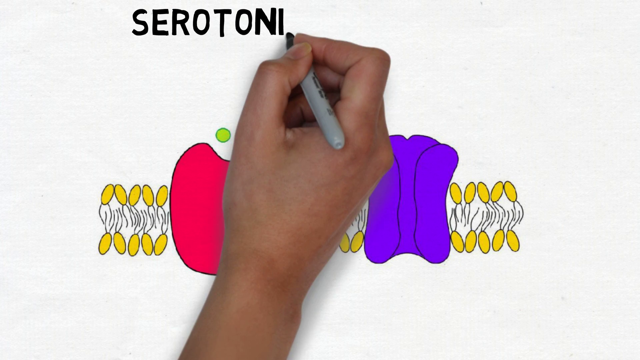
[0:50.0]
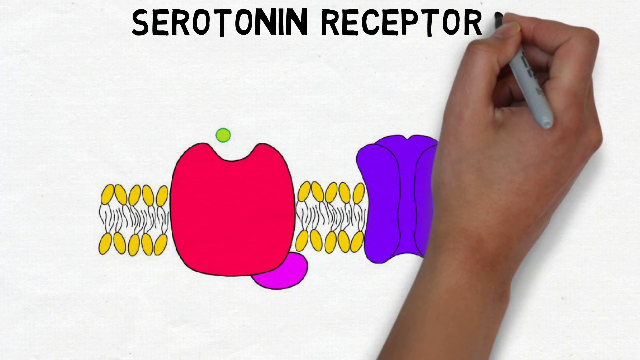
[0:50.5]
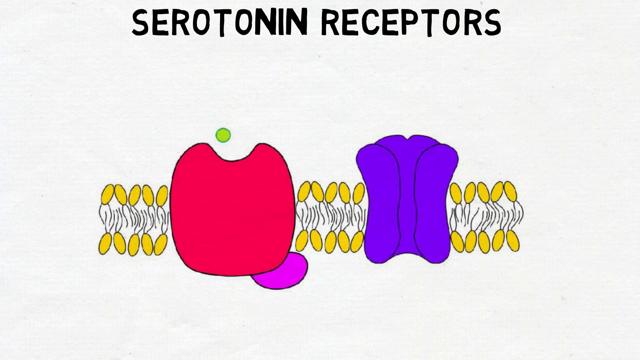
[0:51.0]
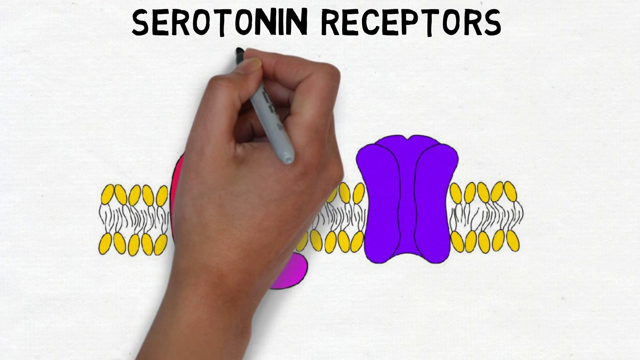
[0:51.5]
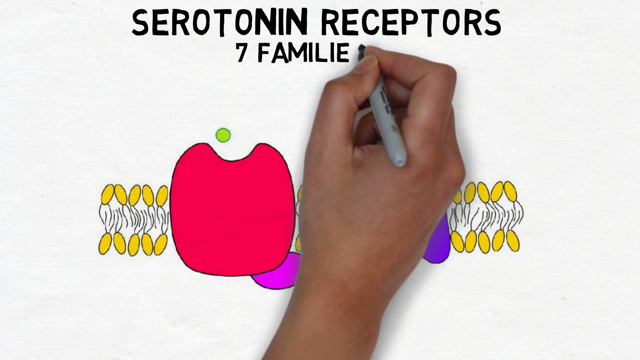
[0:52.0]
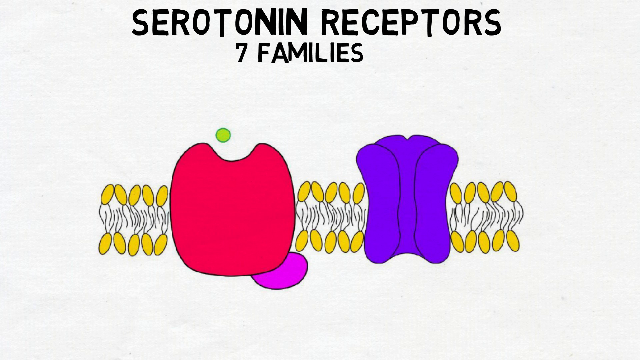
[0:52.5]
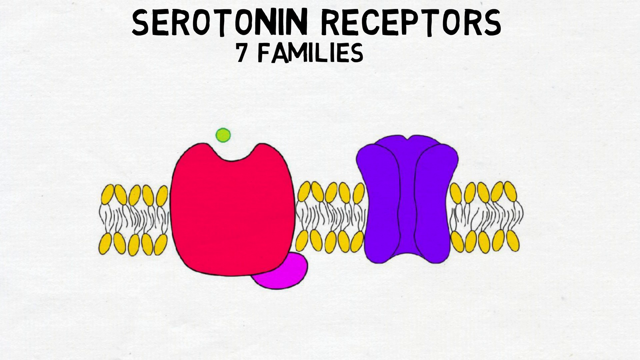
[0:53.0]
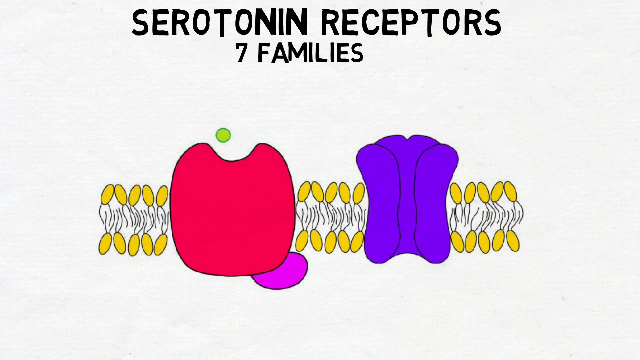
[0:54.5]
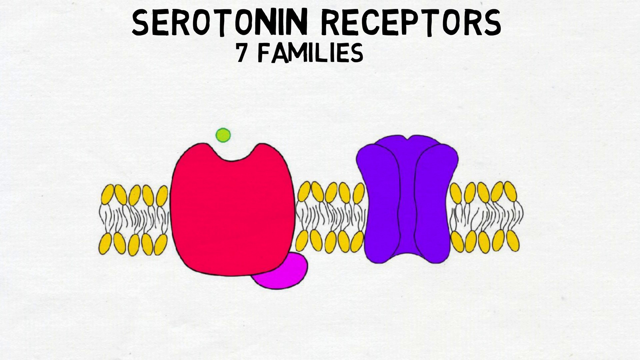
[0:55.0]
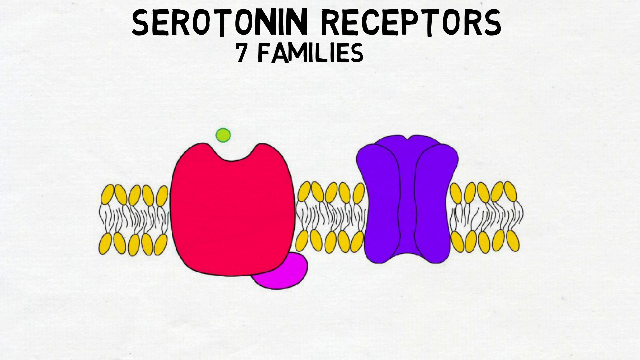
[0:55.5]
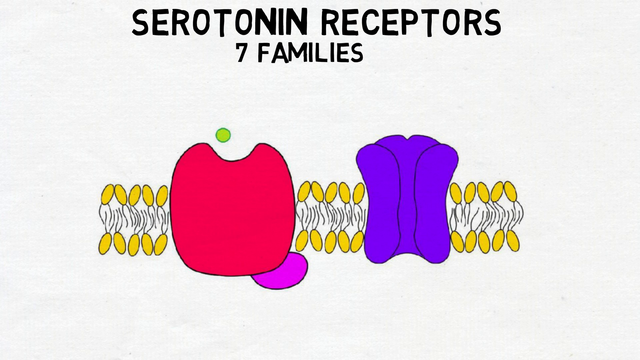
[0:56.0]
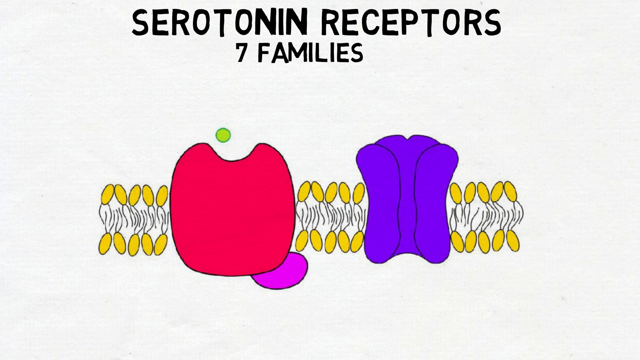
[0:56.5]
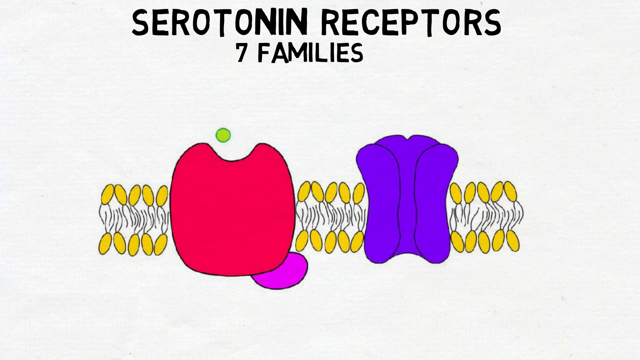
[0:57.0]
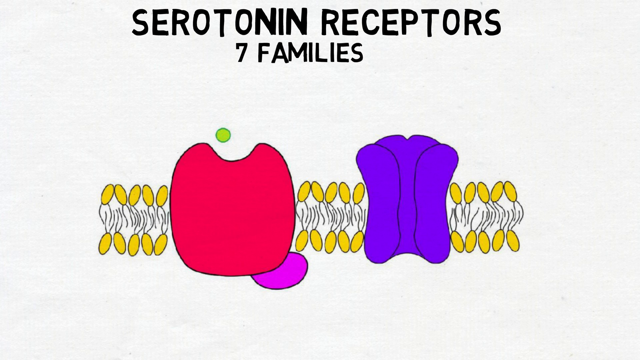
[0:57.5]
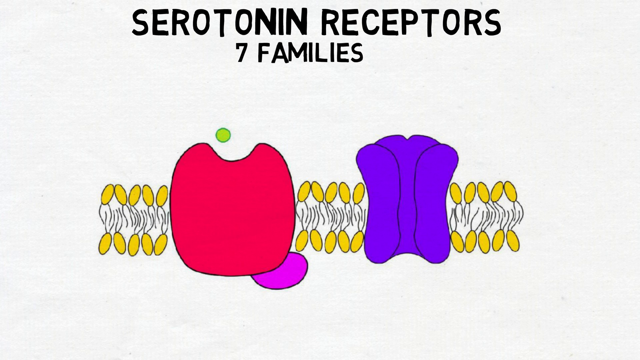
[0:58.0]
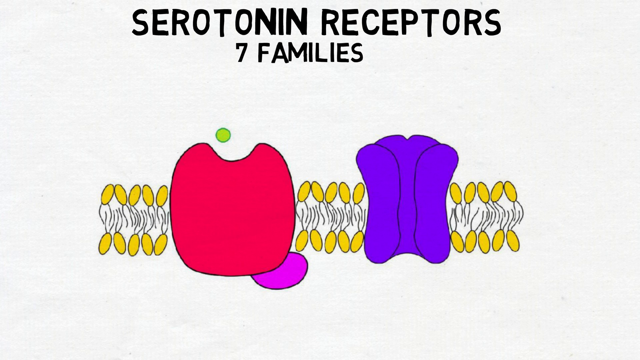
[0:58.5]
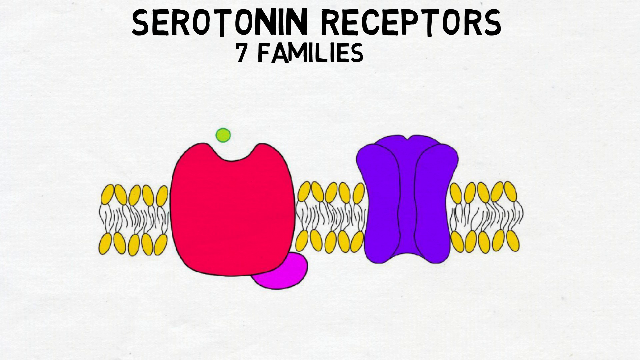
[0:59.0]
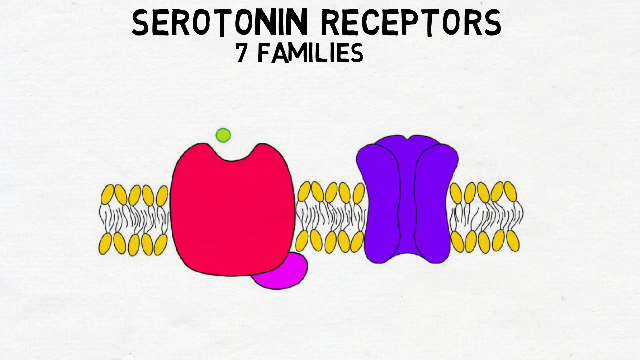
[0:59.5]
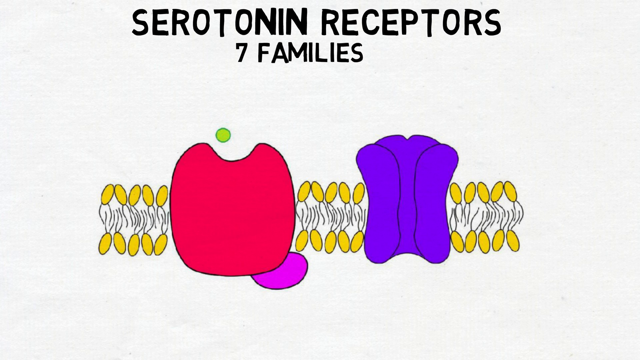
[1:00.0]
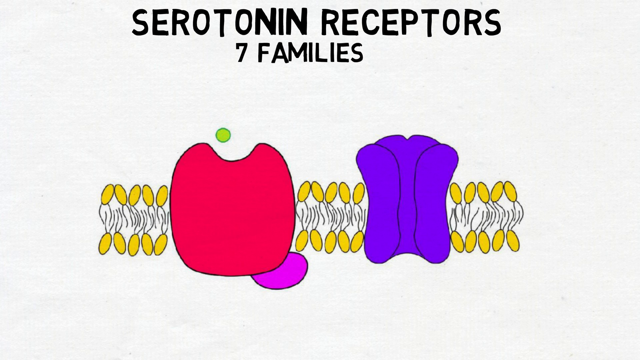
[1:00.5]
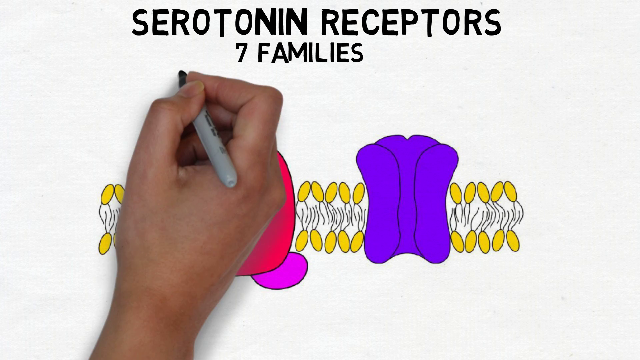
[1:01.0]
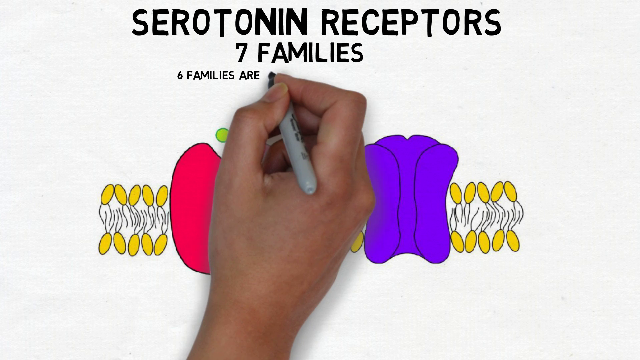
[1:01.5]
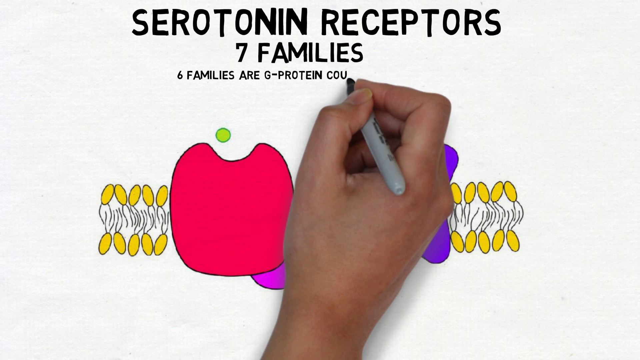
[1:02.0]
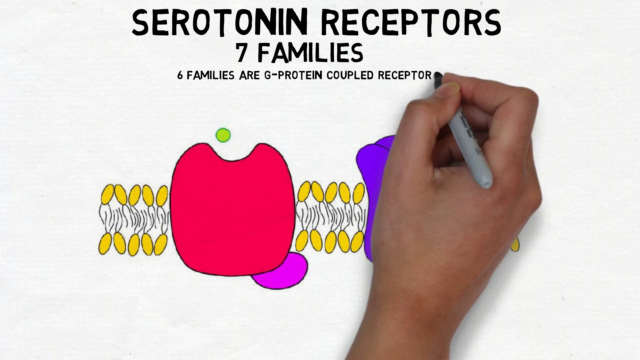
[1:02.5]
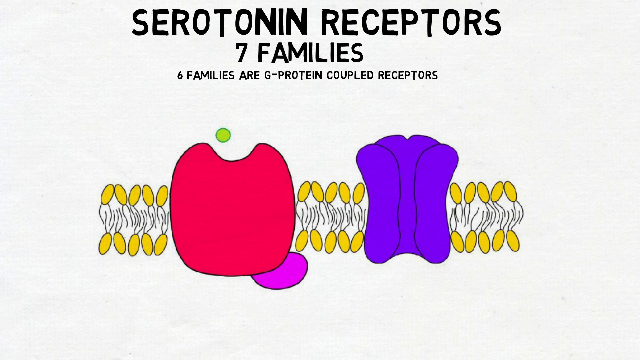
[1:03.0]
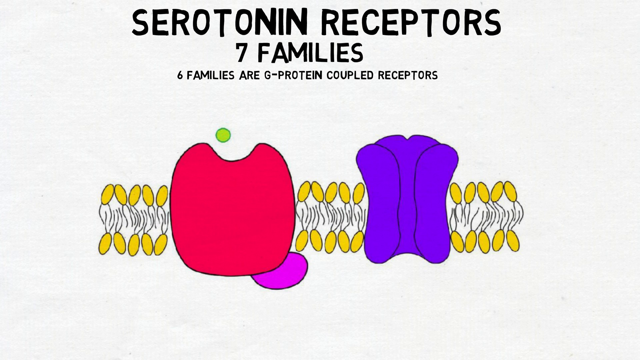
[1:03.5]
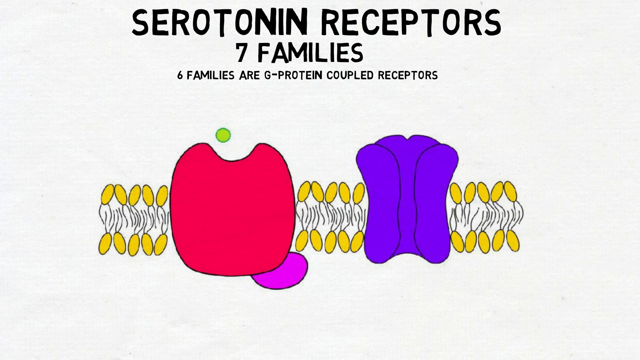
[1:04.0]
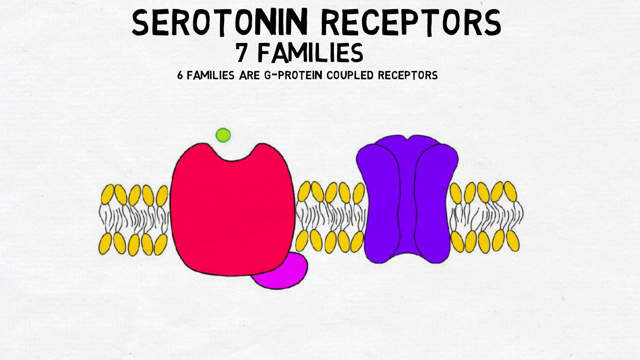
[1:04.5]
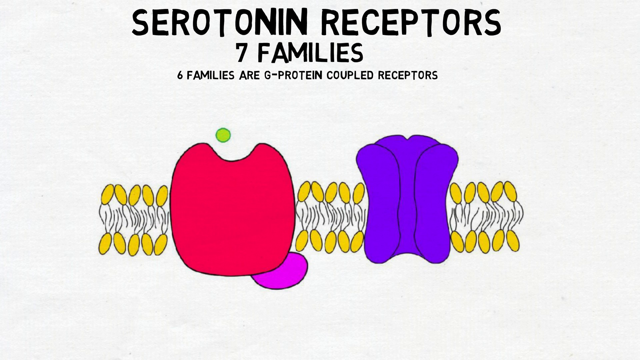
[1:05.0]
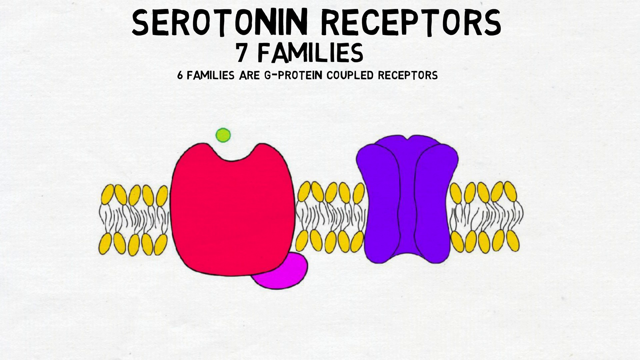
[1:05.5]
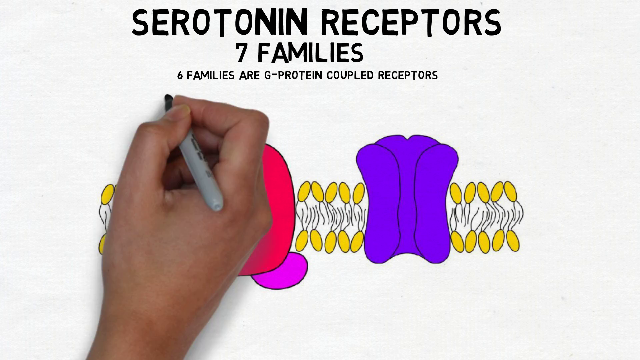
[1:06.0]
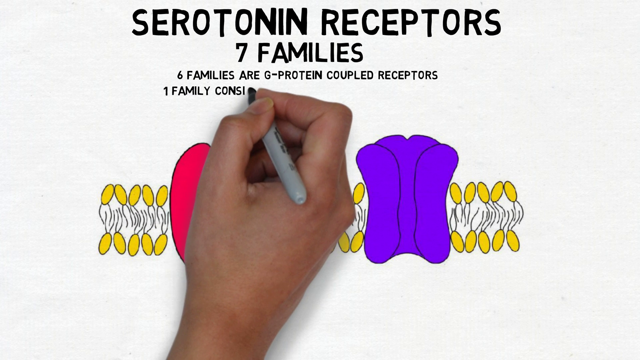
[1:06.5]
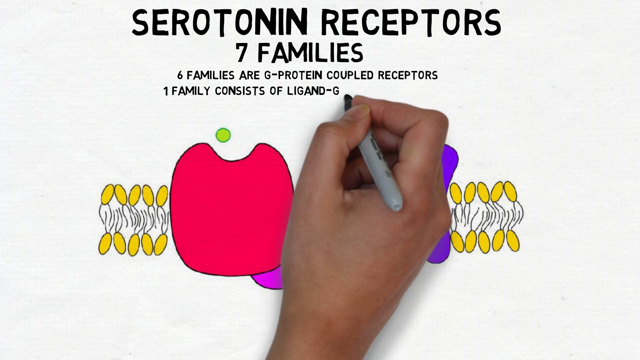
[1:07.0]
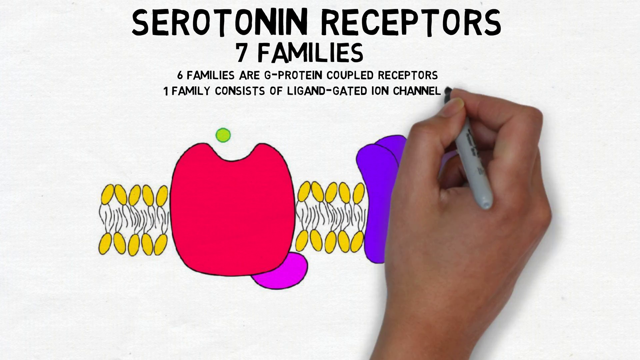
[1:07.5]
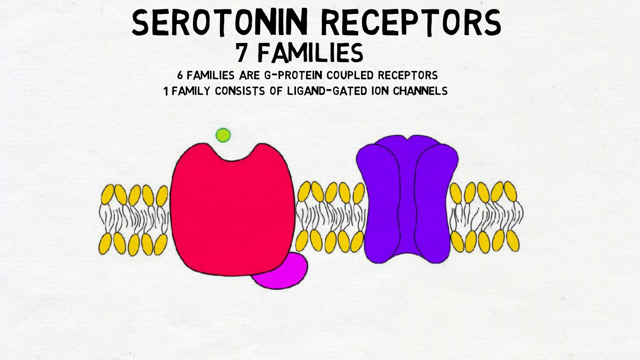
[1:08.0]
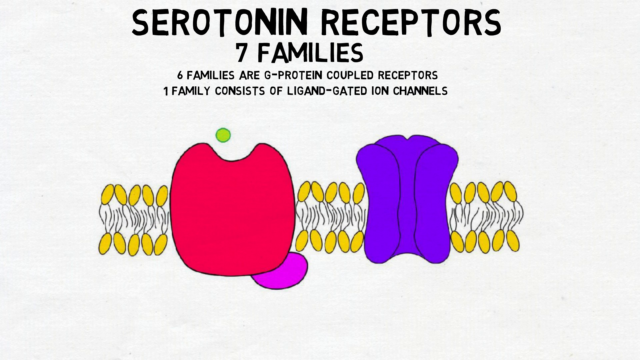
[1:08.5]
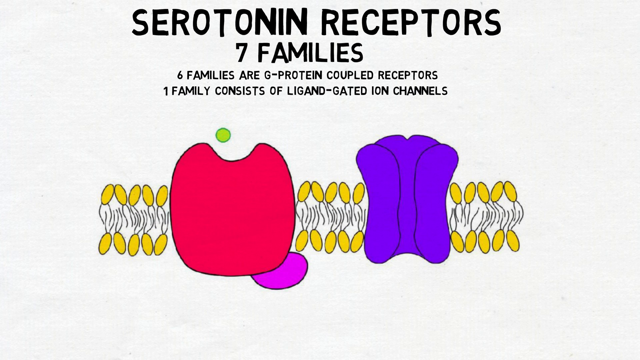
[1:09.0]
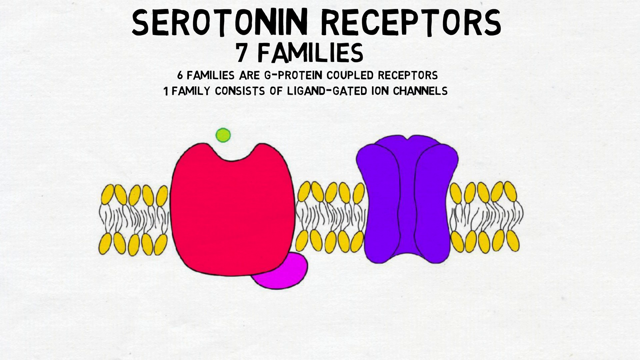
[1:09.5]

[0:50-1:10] On a white screen, slightly left of the middle, is a small bright red design that kind of looks like an apple, with a small green dot floating above it. To its right is a purple design that looks like a smaller apple. Lines with orange balls at their tips are between the two designs, connecting them. At the top of the page it says "serotonin receptors." A hand holding a gray marker with a black tip writes "seven families" underneath "serotonin receptors." The hand, a right hand holding the marker between the index finger and thumb, comes back into frame and writes underneath "seven families" in black: "six families are G protein coupled receptors." Underneath that it writes "one family consists of ligand-gated ion channels."